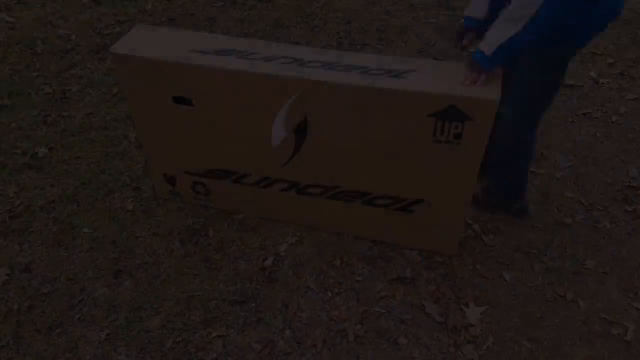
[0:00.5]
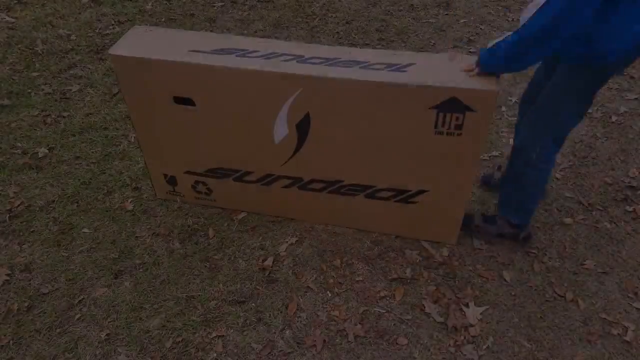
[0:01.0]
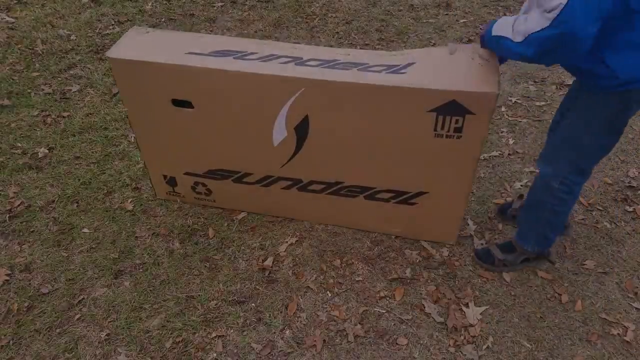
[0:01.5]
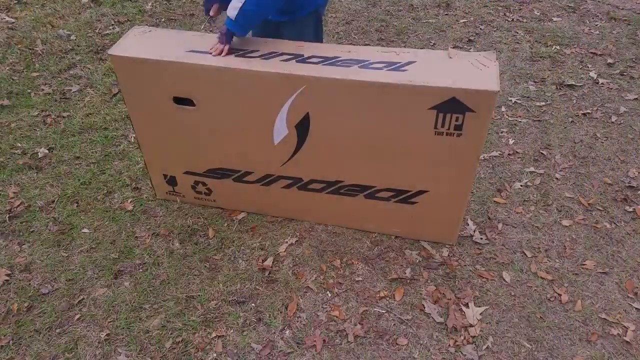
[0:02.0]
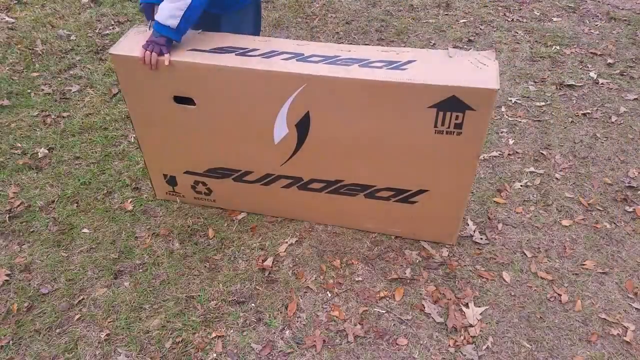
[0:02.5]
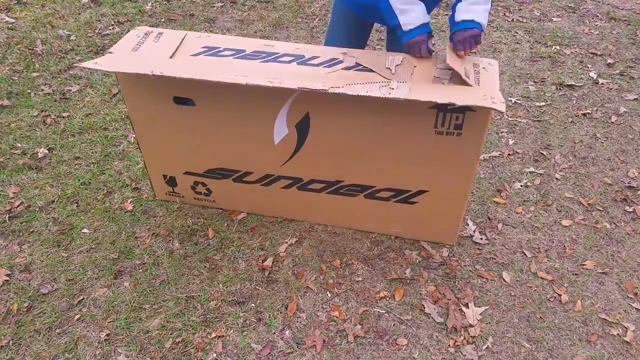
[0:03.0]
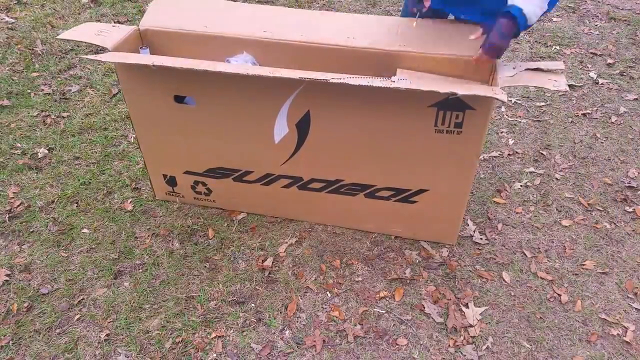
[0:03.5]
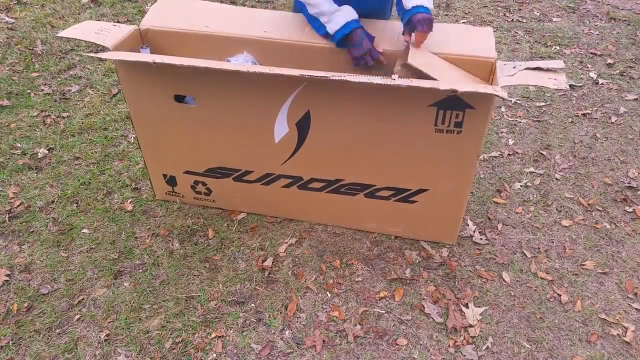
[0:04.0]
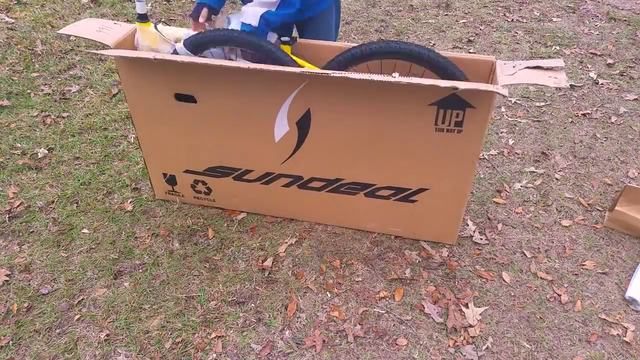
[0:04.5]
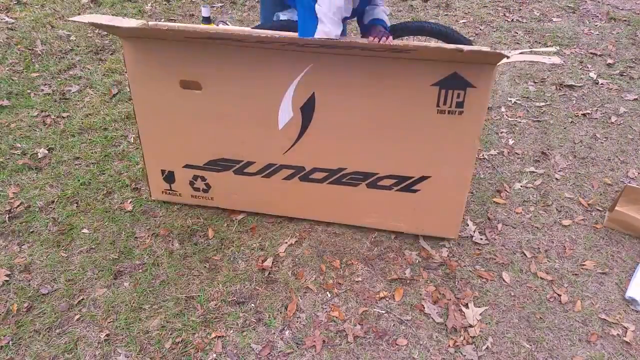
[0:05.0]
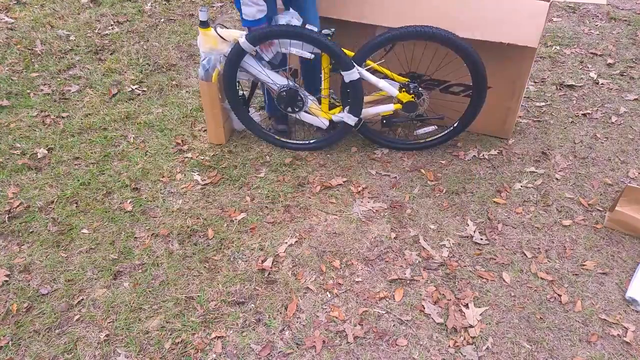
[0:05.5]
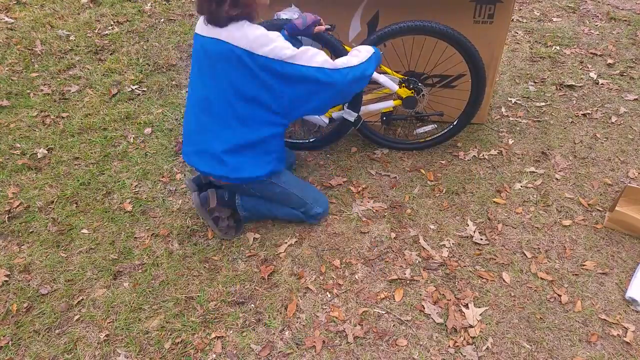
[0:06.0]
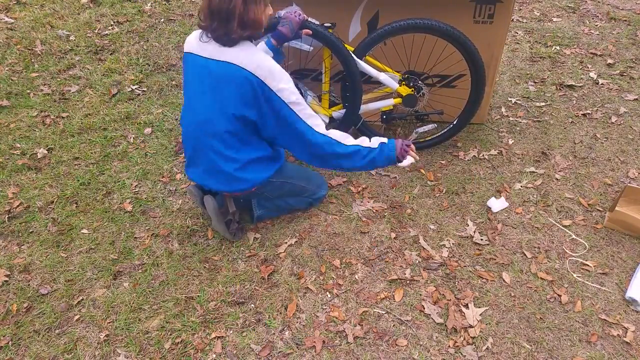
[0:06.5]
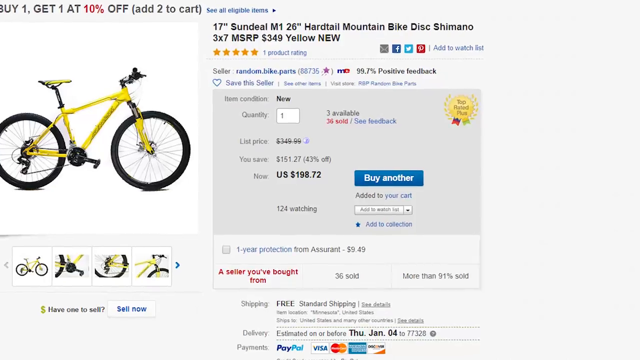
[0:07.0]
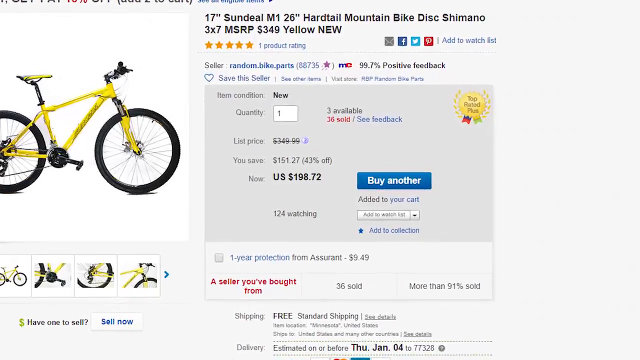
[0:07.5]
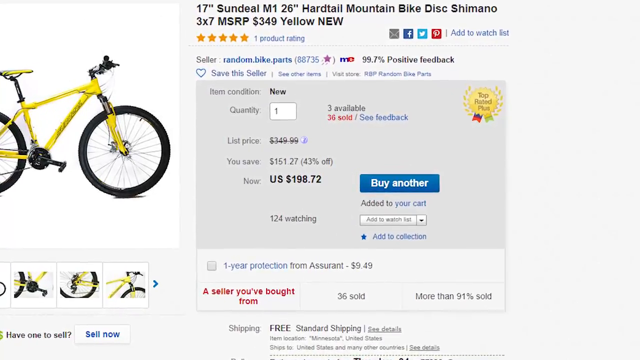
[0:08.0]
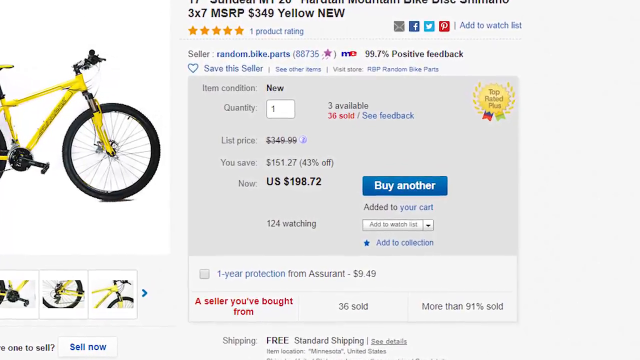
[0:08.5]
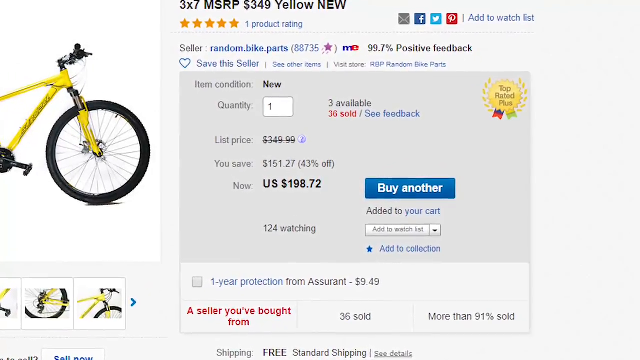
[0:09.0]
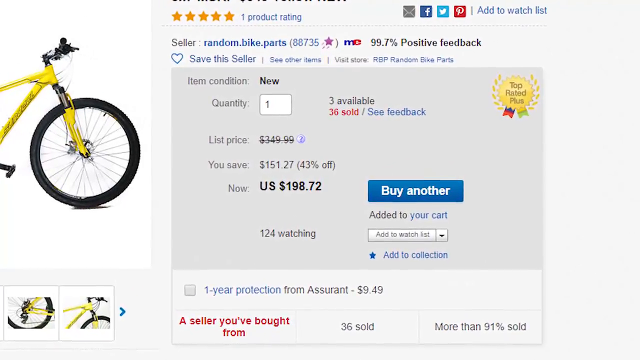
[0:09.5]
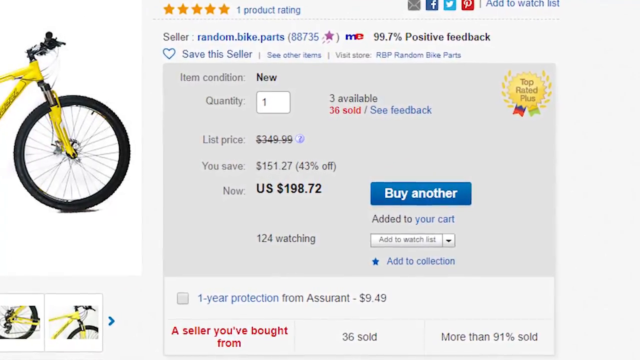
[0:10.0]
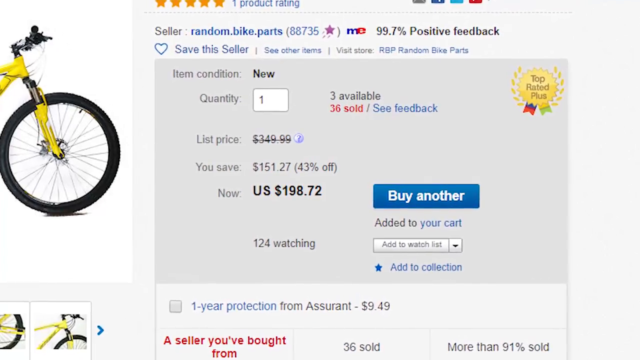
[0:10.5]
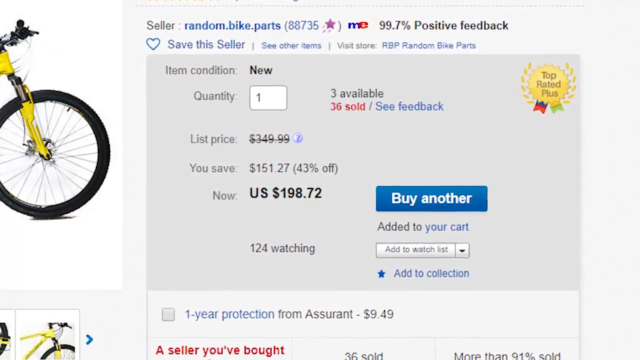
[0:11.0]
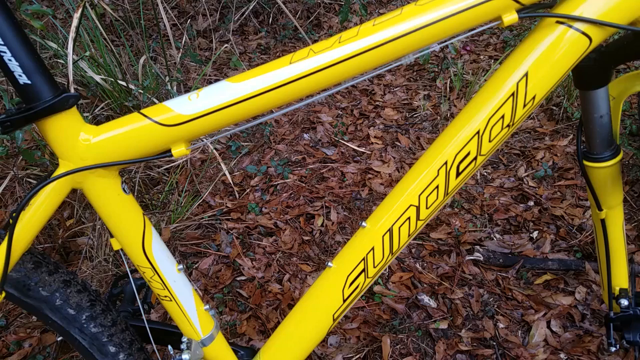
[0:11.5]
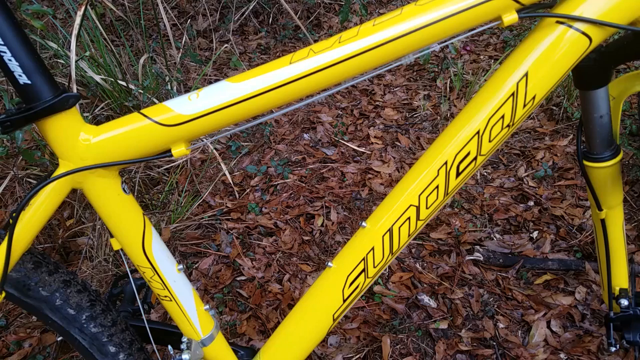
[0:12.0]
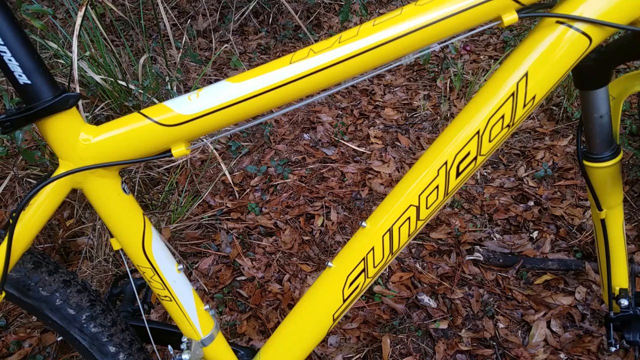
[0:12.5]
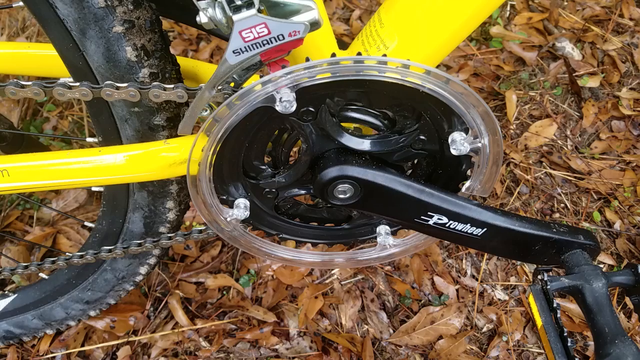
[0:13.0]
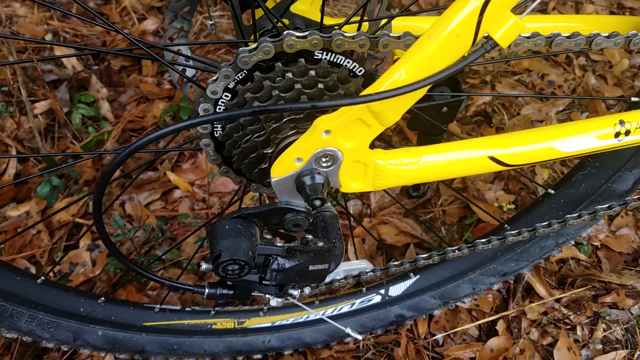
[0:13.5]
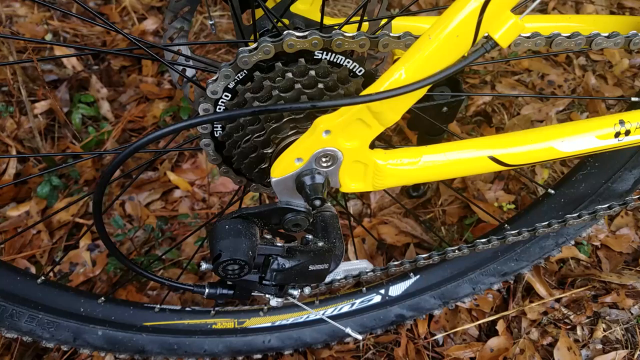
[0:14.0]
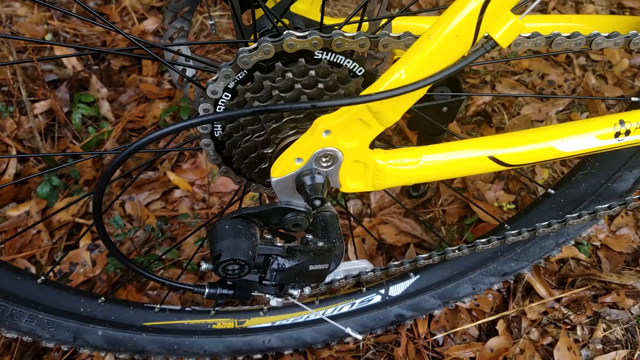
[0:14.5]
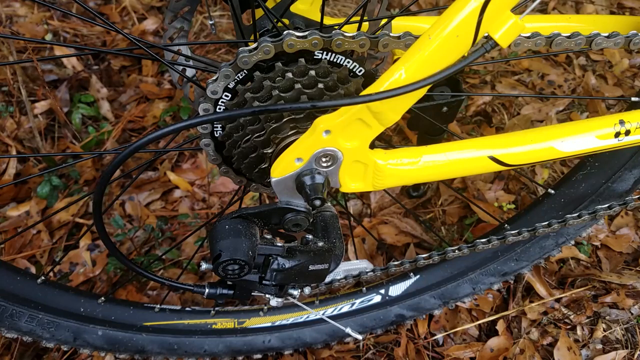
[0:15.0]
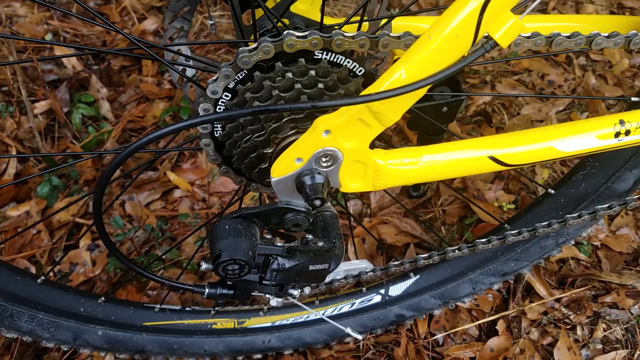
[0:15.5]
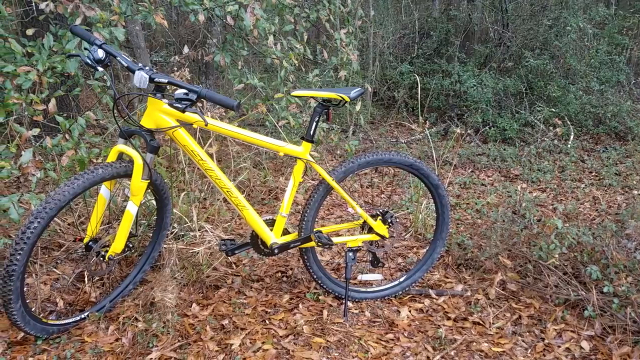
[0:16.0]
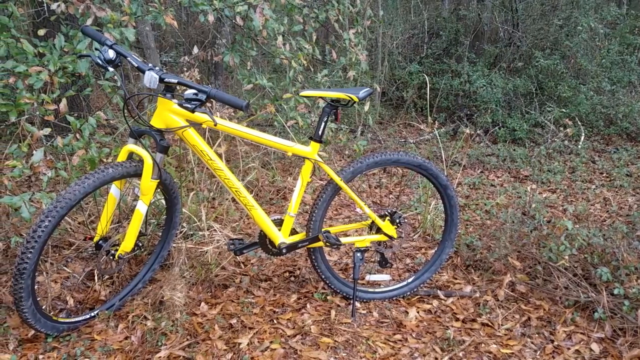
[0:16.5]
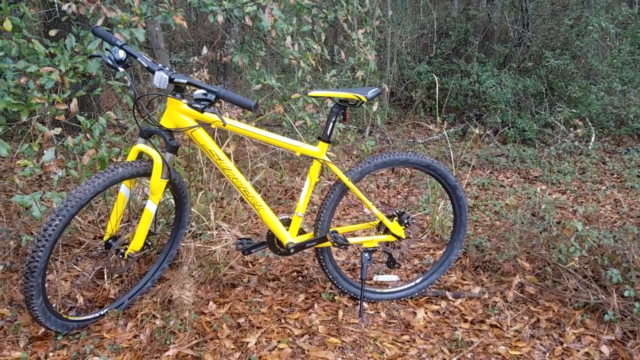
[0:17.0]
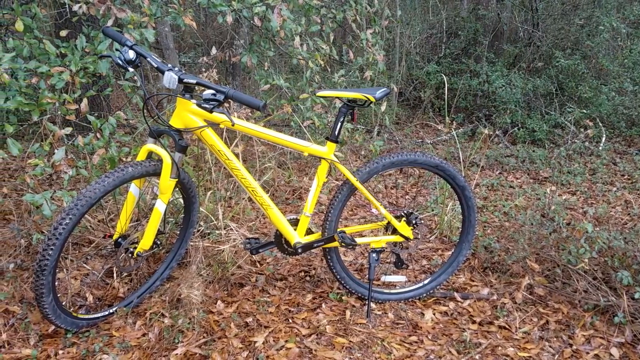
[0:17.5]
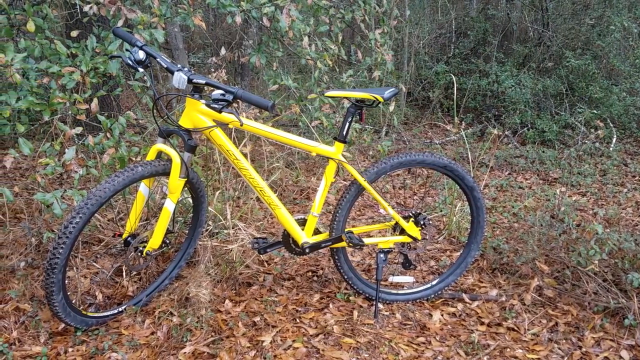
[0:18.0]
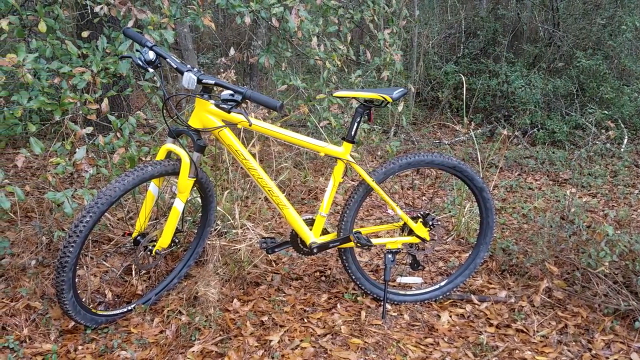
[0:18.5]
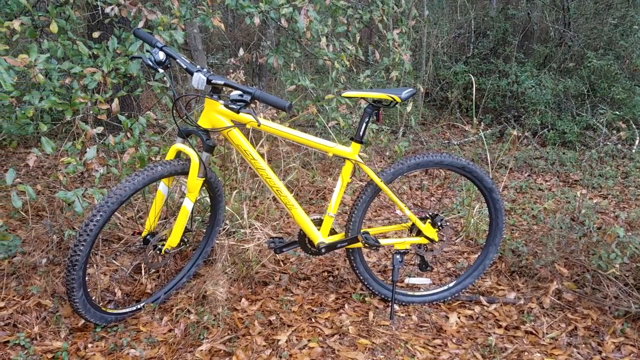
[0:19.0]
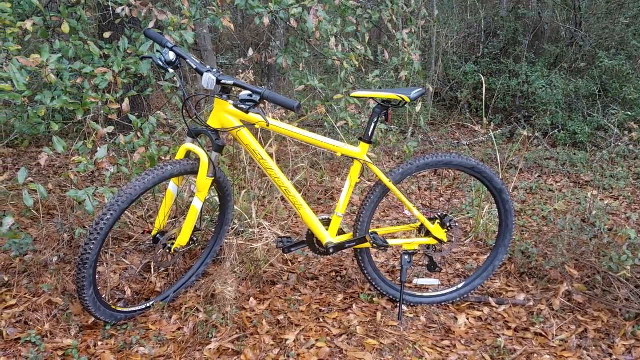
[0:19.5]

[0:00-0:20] A box is opened; the writing on it appears to say "Sun deal." With the box open, wheels are pulled out, revealing a yellow bike. A computer screen then shows what looks like an Amazon listing: "17 inch Sun deal MT 26 inches hardtail mountain bike disc Shimano three times seven MSRP $349 yellow new." It says "you save $151," the price is $198.72, and the seller has sold 36 of them. The bike in the listing picture is yellow, as is the one the man received. Close-ups follow of the frame and of a shaft part, and the chain has no grease on it yet.